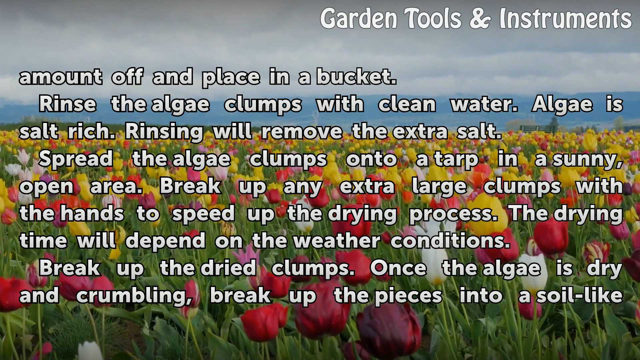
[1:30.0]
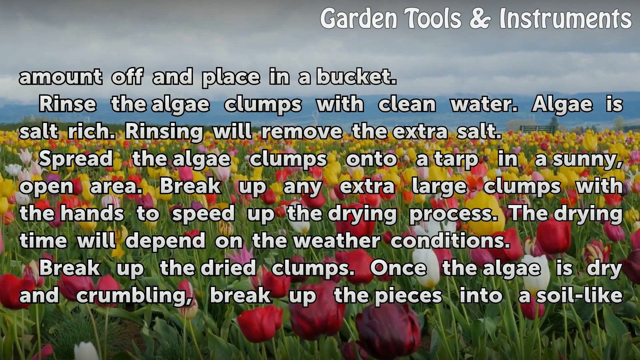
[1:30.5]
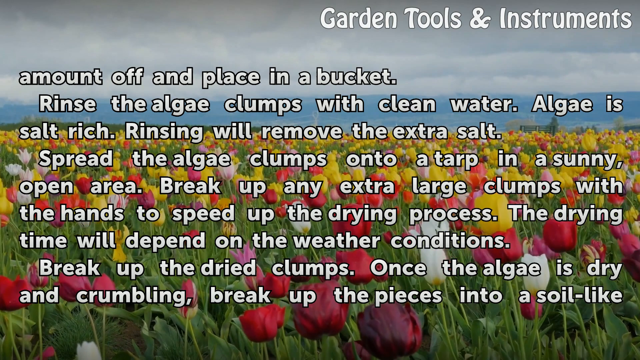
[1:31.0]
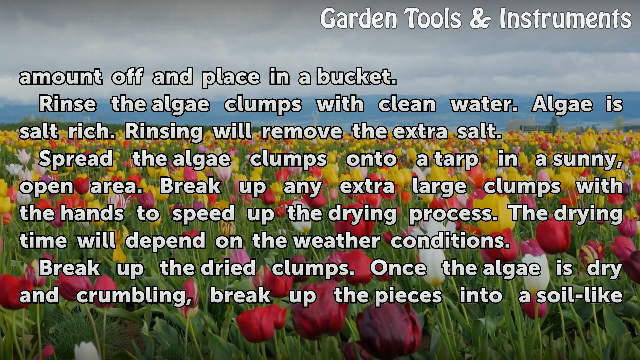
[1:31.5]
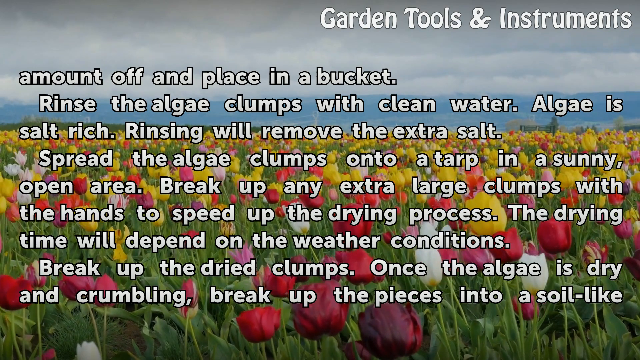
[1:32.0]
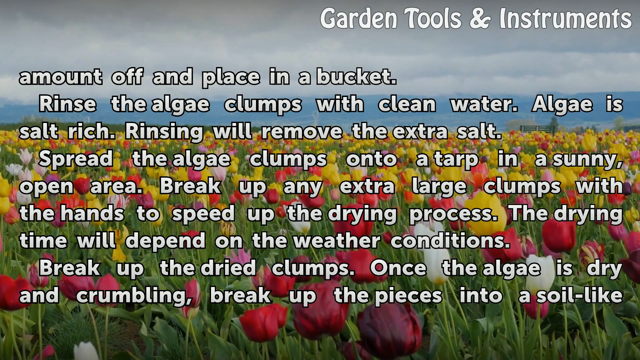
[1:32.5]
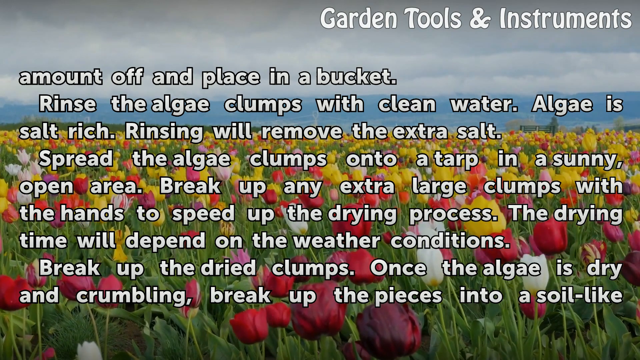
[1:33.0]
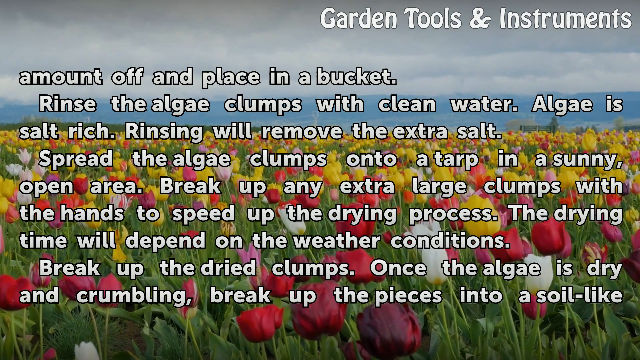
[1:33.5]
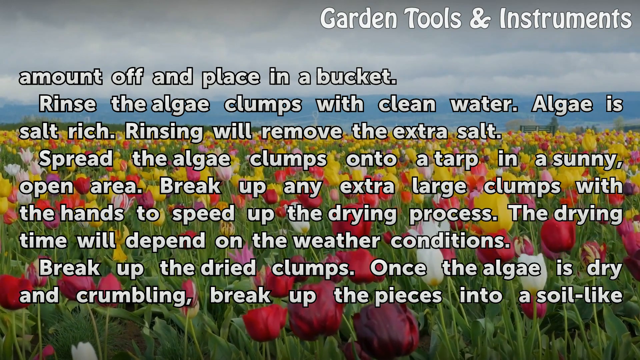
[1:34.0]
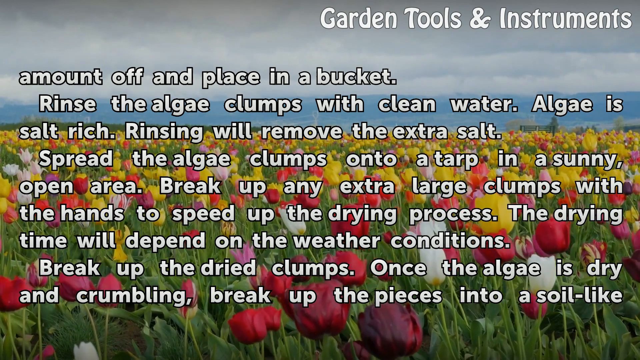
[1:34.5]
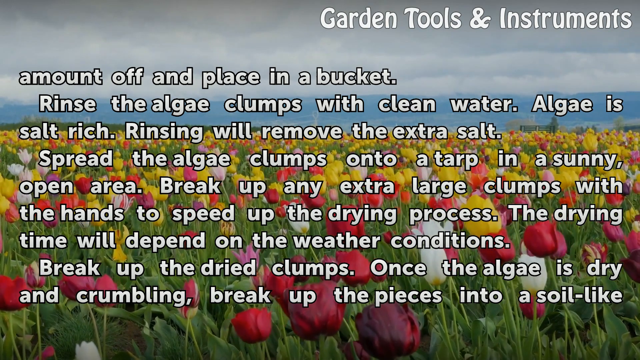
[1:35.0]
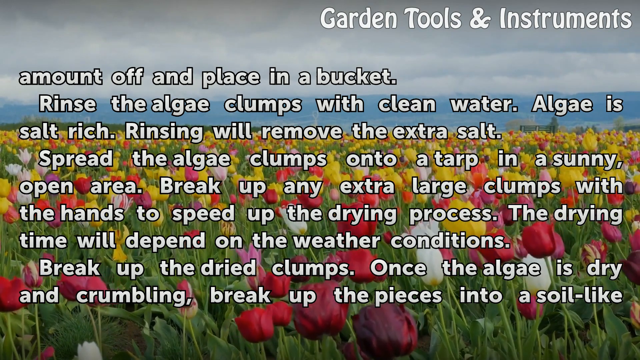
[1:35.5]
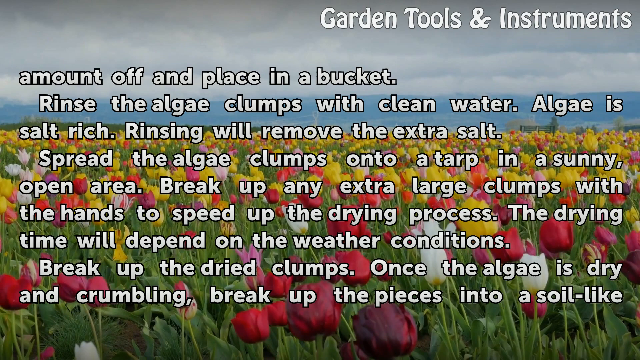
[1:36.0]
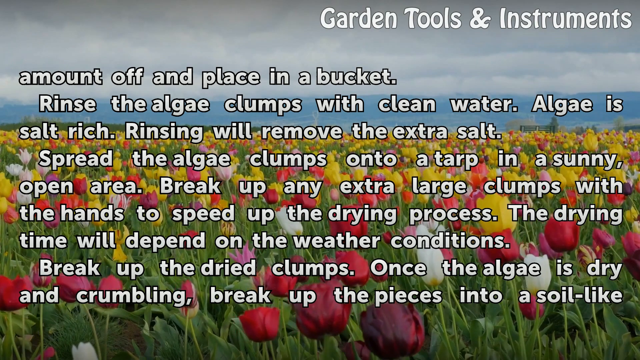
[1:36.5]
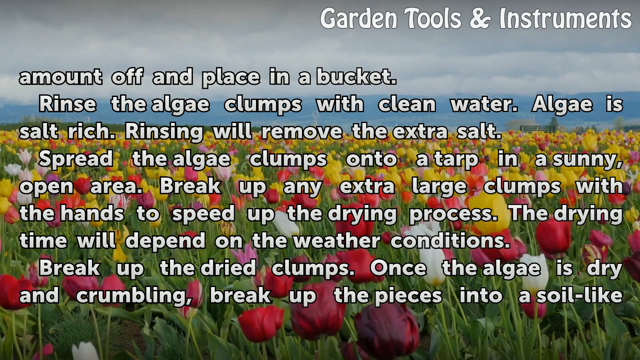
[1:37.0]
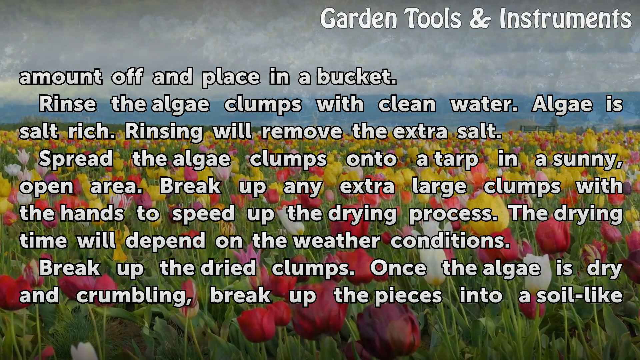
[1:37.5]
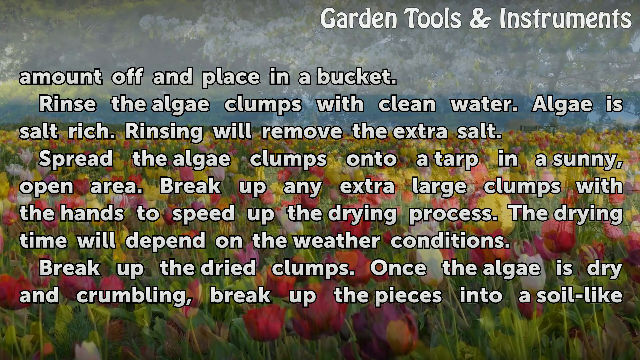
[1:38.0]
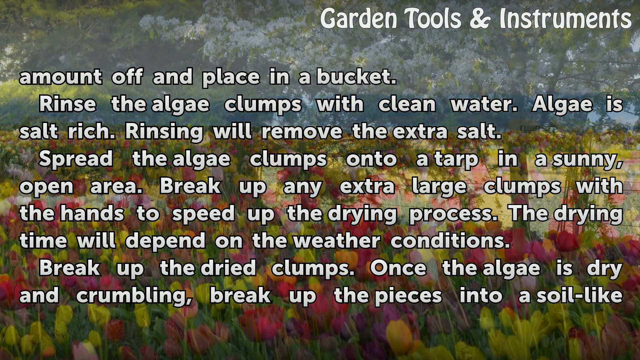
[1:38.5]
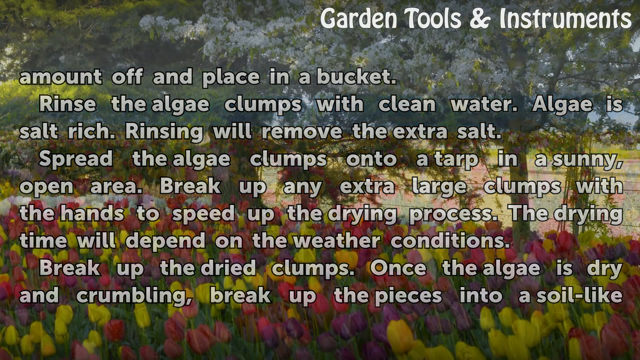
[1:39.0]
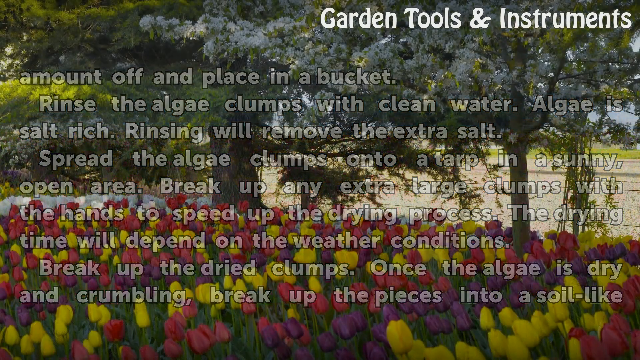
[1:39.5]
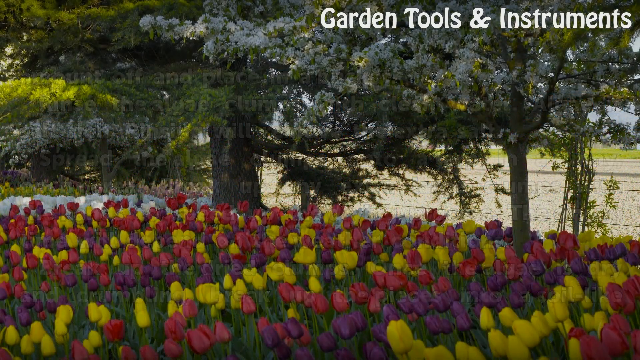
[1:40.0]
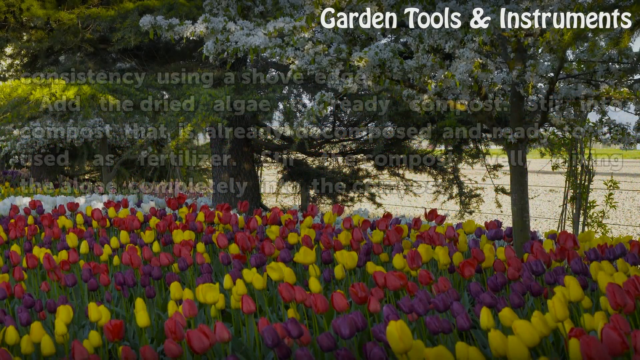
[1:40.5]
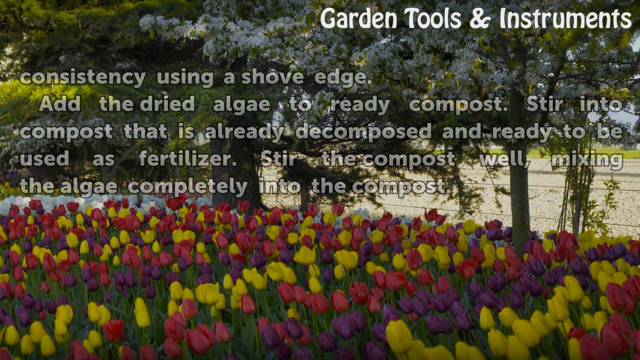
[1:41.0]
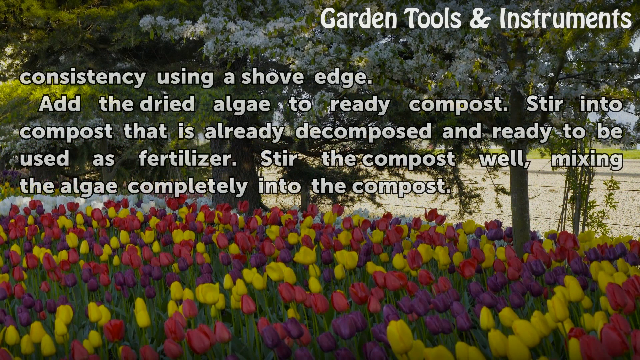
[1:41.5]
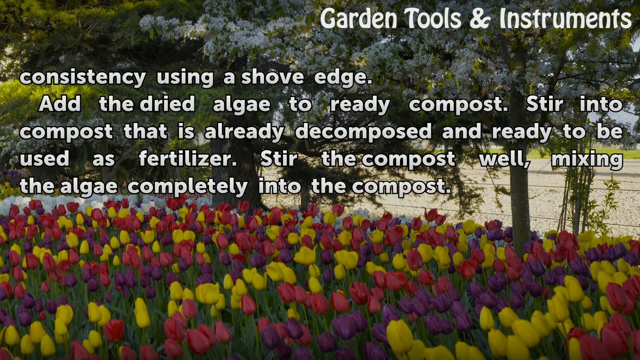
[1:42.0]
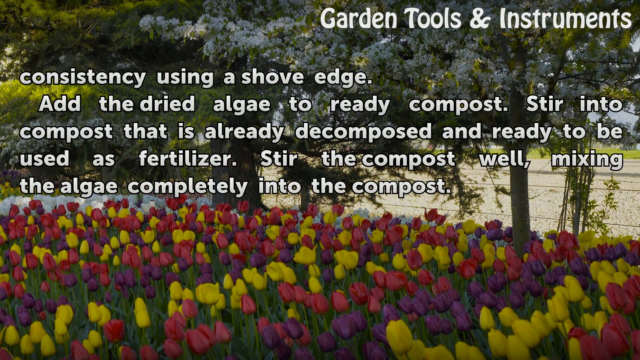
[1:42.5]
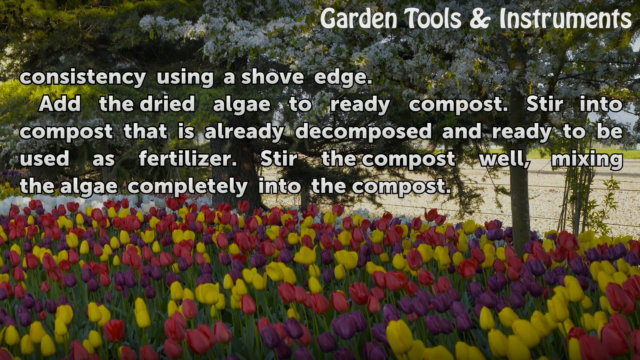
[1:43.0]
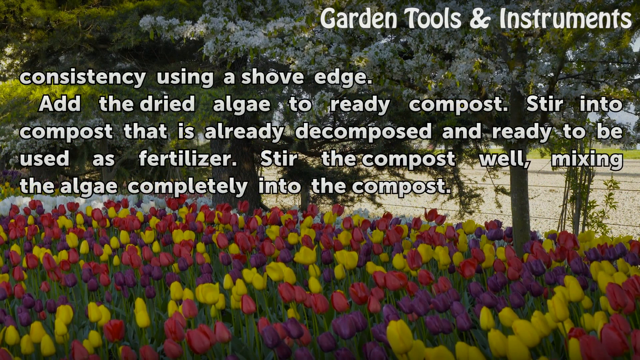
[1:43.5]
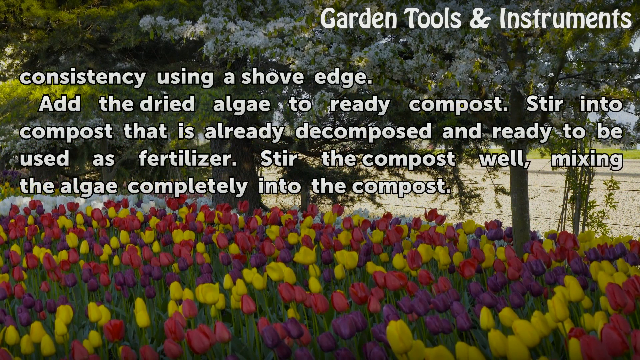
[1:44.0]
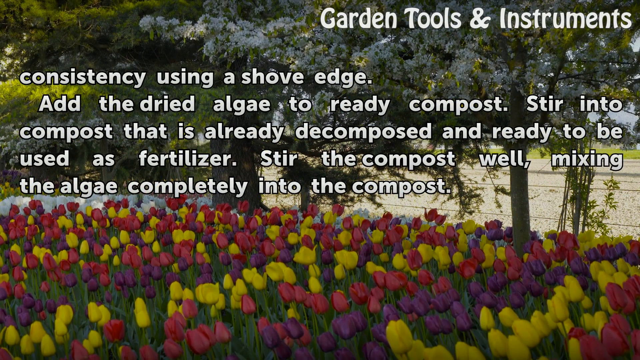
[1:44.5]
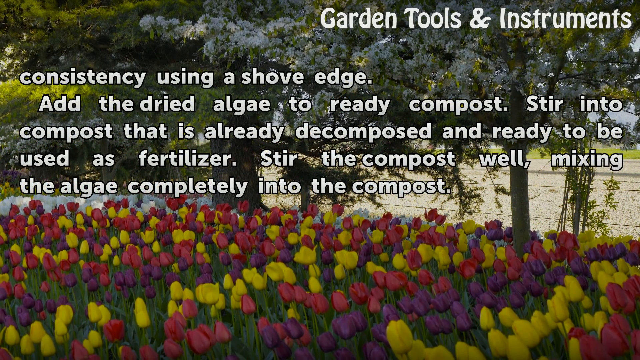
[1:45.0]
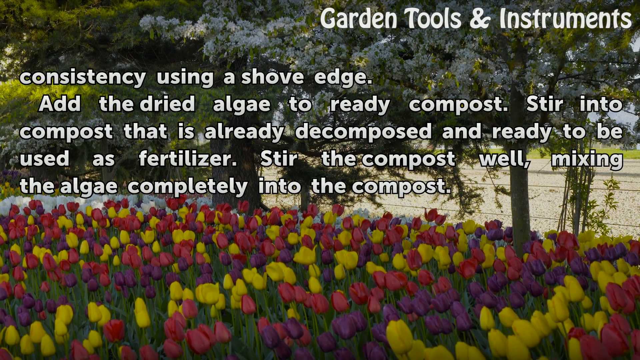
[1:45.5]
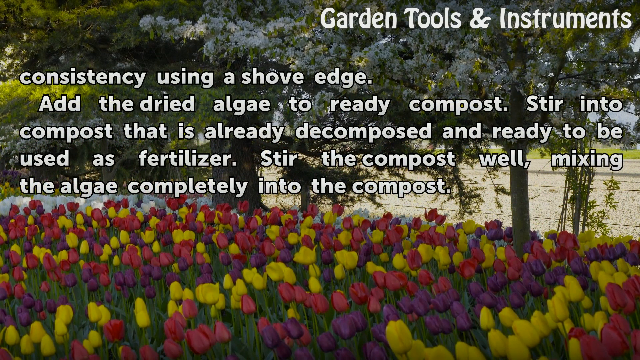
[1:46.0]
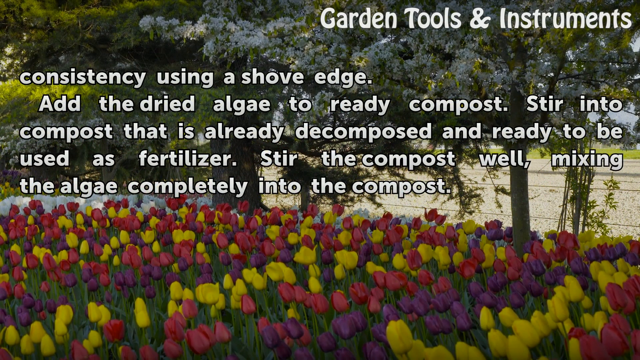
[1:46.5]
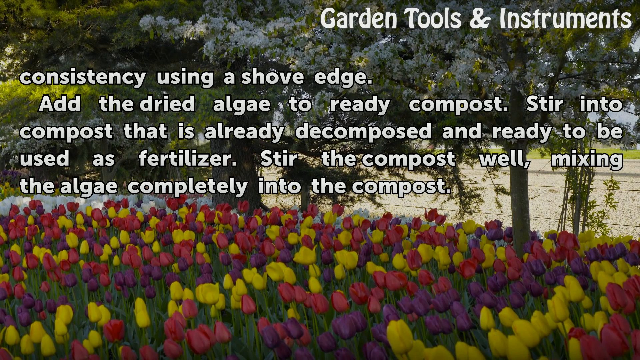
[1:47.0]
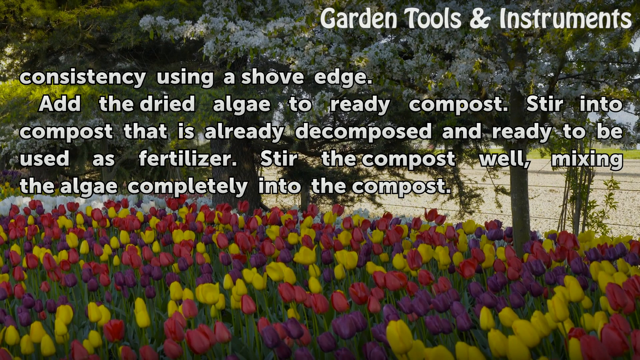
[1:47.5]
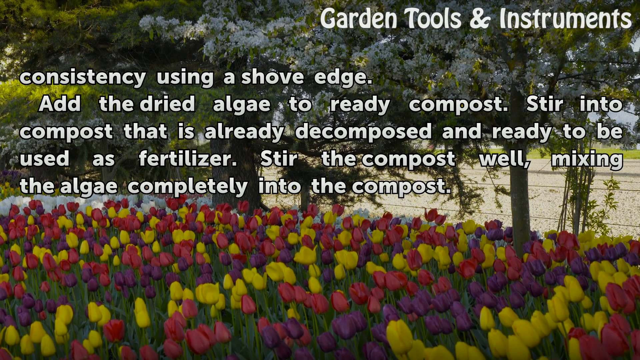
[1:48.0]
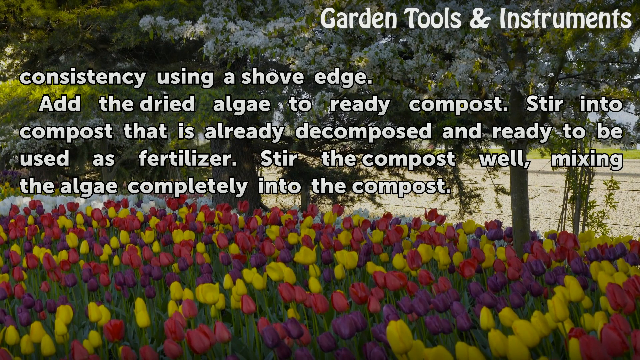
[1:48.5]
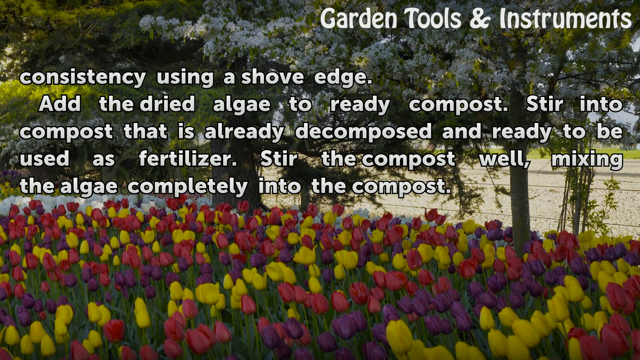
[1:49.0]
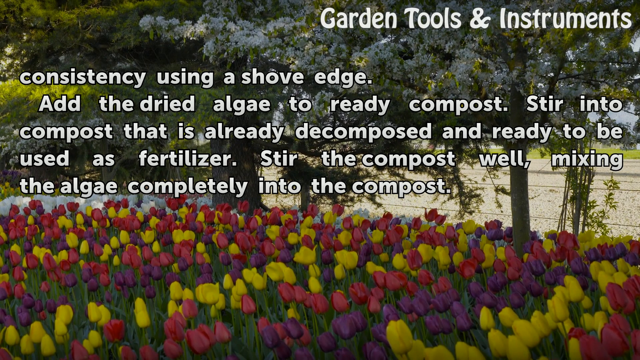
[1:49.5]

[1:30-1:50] White-font instructions appear in front of a picture of many different colored tulips under a blue sky, with the heading "garden tools and instruments". The image is still, but the flowers behind the letters sway back and forth. There are no people in the video, only the words. The text reads "Rinse the algae clumps with clean water. Algae is salt rich. Rinsing will remove the extra salt. Spread the algae clumps onto a tarp in a sunny open area. Break up any extra large clumps with the hands to speed up the drying process. The drying time will depend on the weather conditions. Break up the dried clumps." It continues: "consistency using a shovel edge. Add the dried algae to ready compost. Stir into compost that is already decomposed and ready to be used as fertilizer."